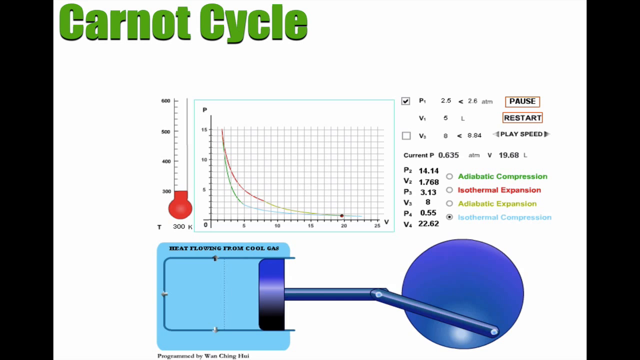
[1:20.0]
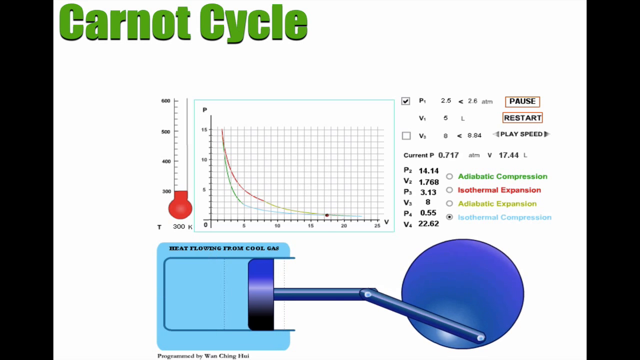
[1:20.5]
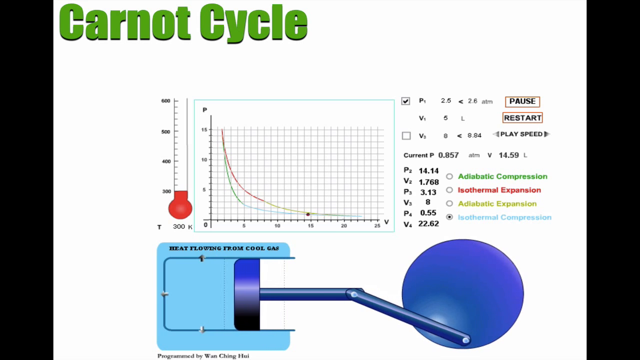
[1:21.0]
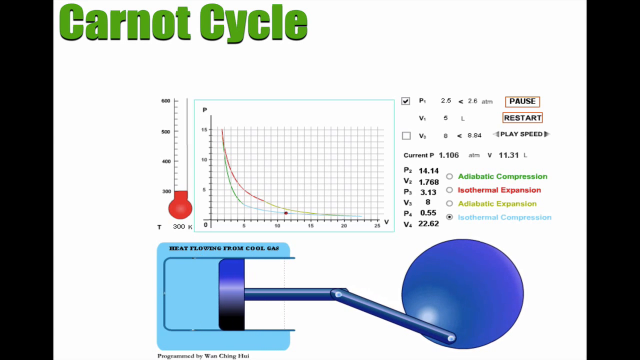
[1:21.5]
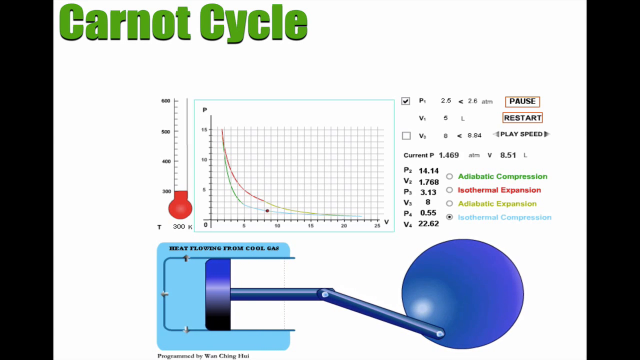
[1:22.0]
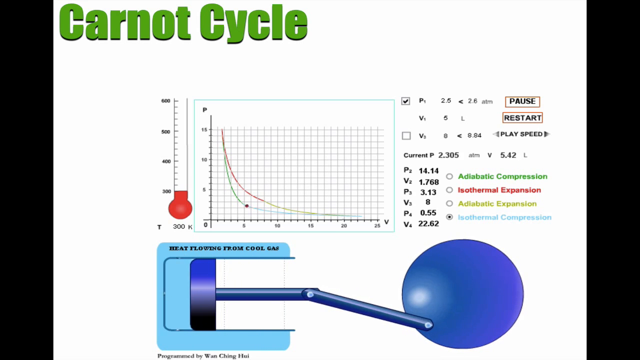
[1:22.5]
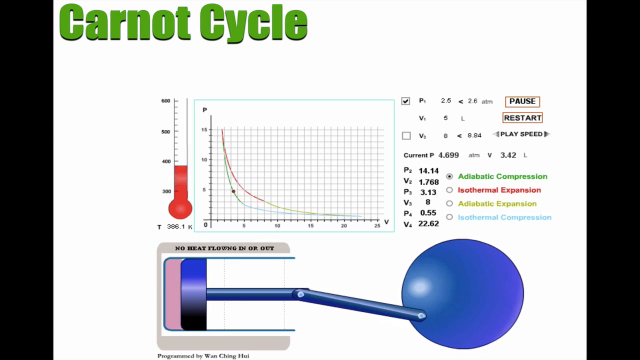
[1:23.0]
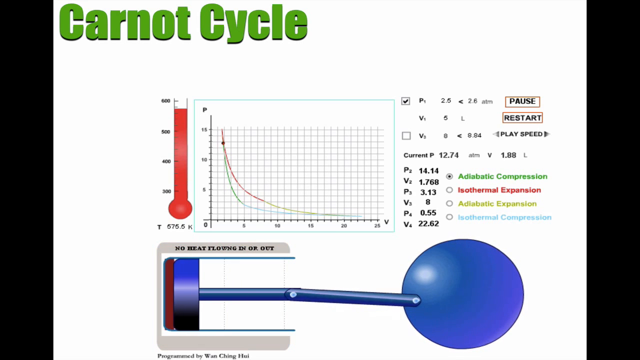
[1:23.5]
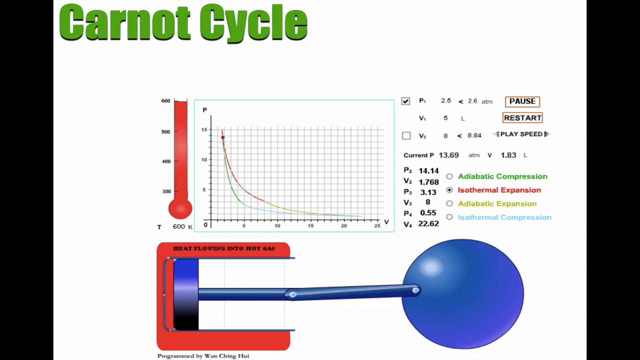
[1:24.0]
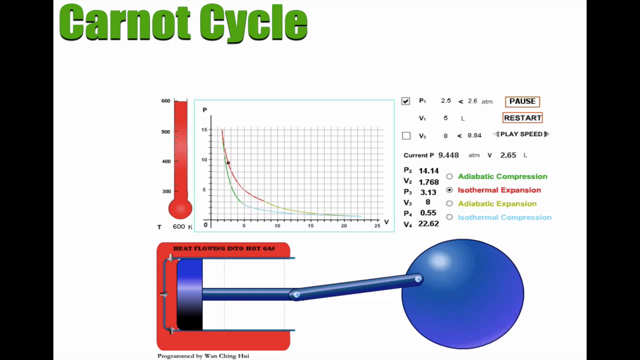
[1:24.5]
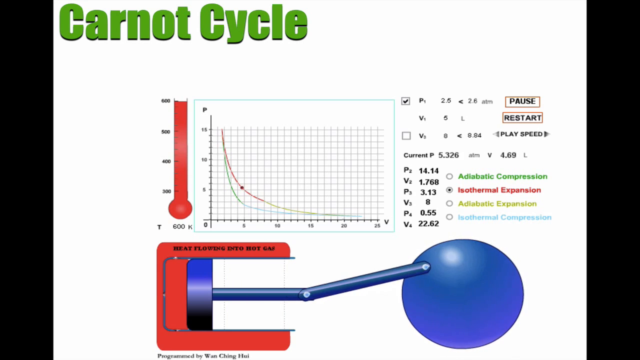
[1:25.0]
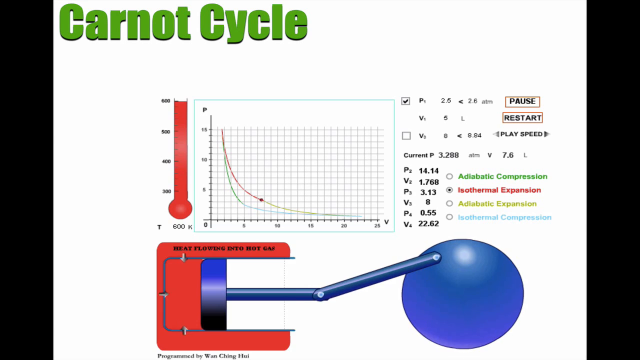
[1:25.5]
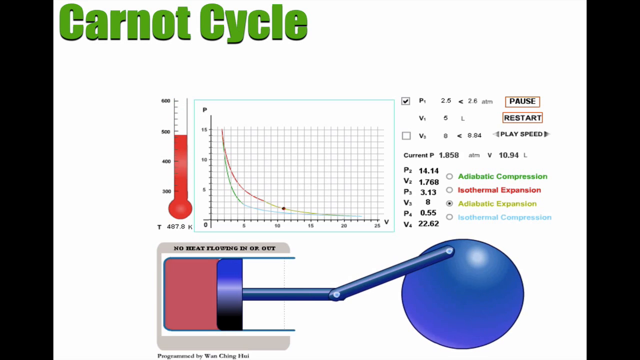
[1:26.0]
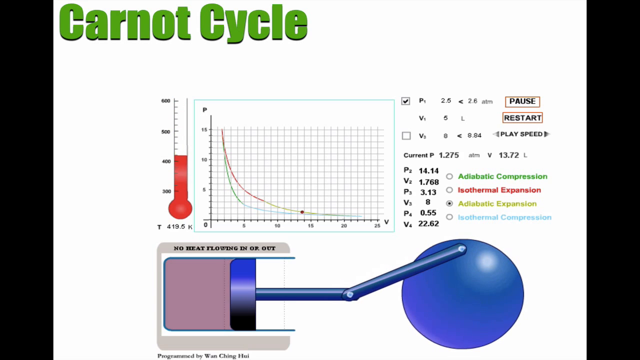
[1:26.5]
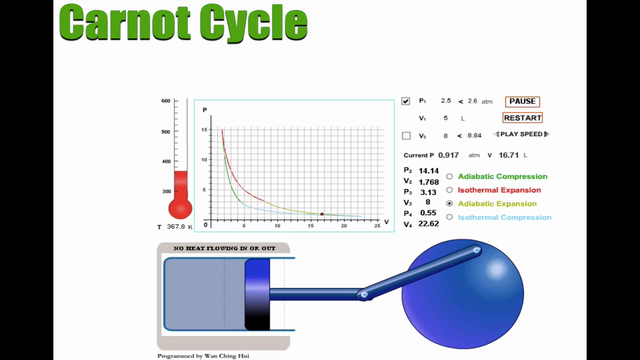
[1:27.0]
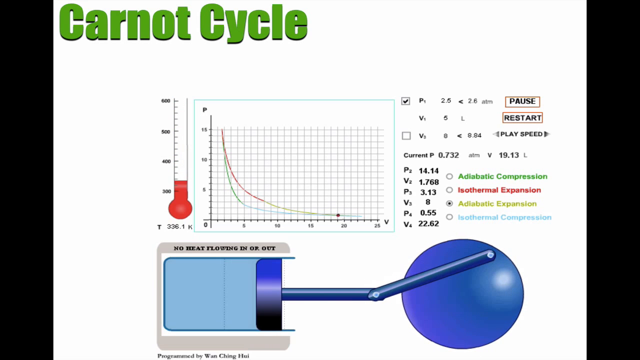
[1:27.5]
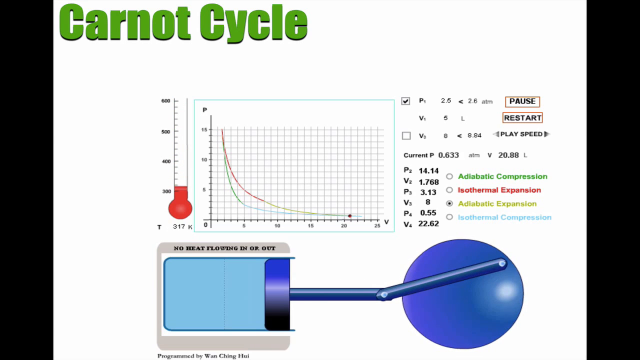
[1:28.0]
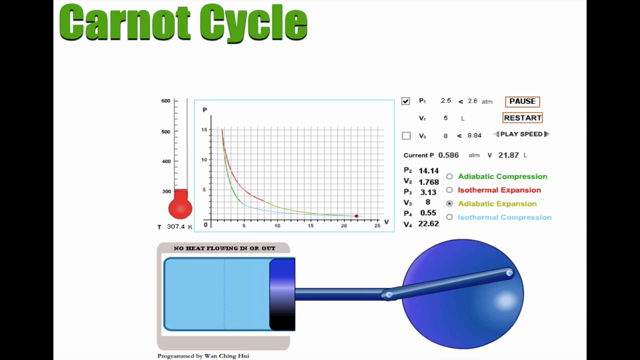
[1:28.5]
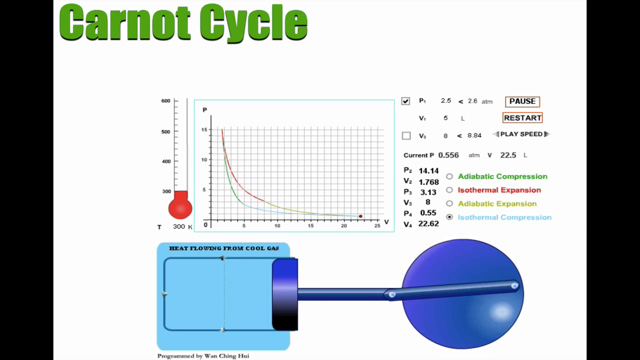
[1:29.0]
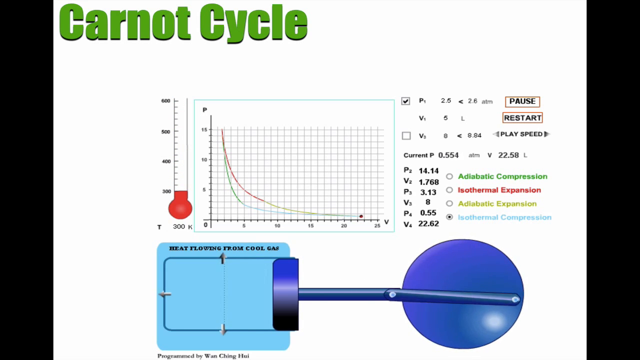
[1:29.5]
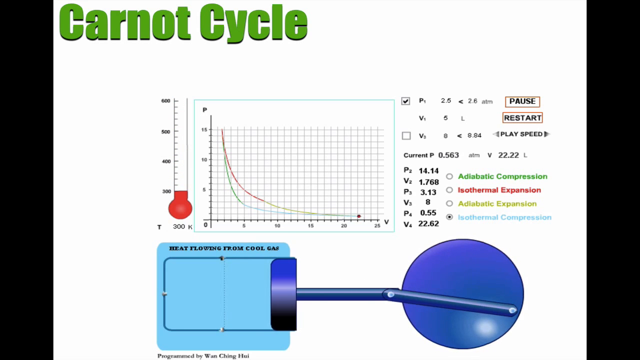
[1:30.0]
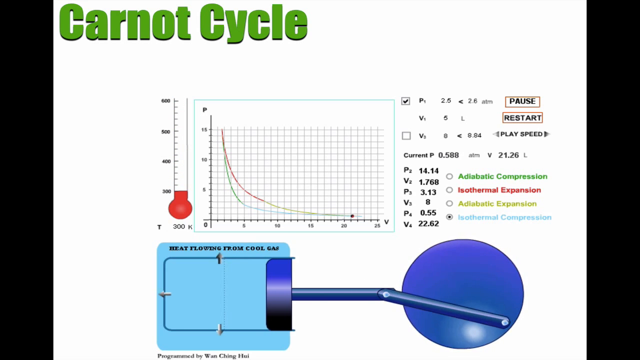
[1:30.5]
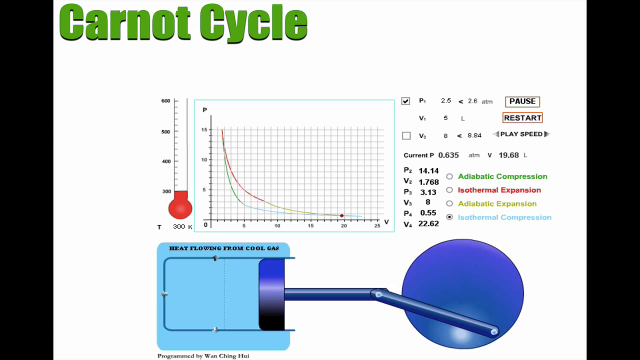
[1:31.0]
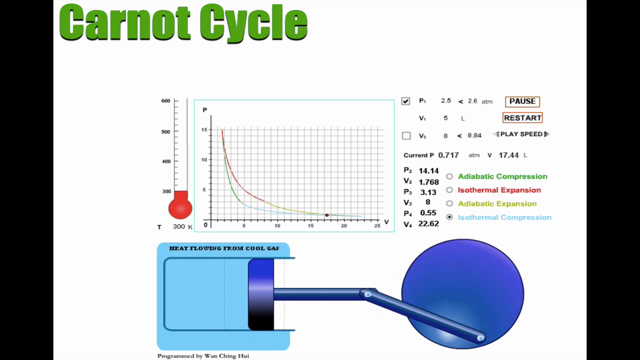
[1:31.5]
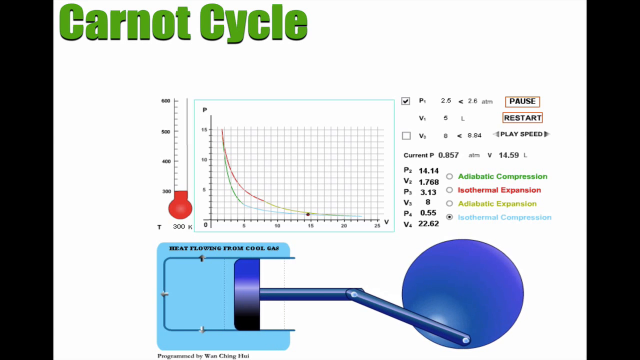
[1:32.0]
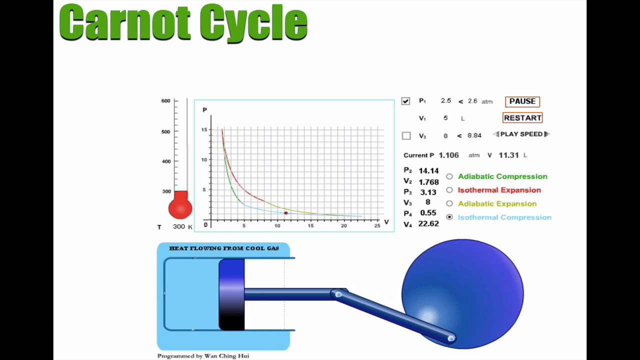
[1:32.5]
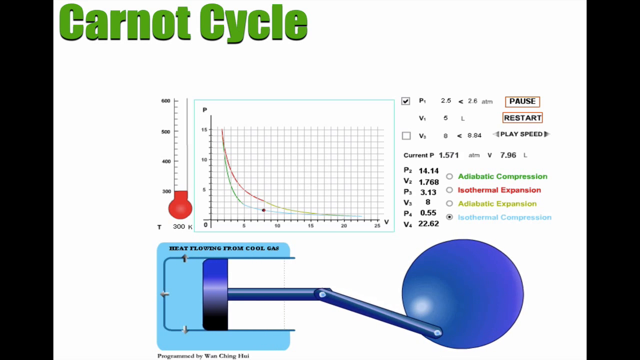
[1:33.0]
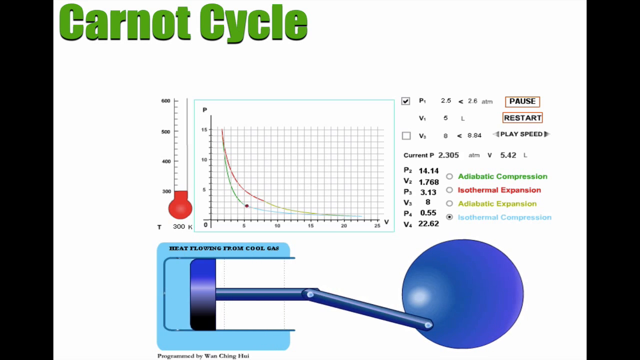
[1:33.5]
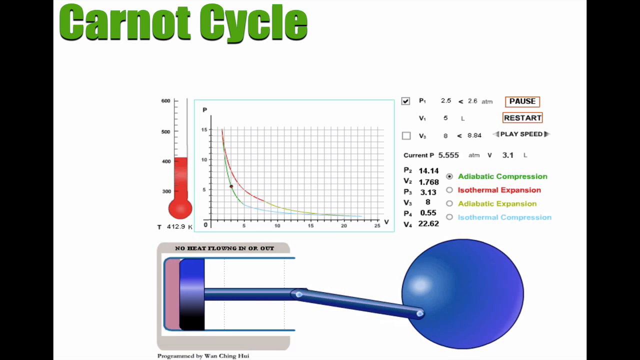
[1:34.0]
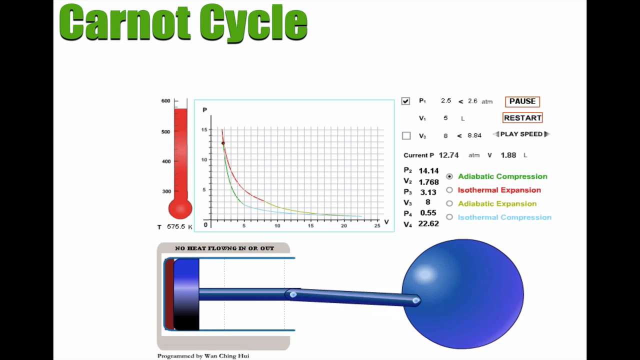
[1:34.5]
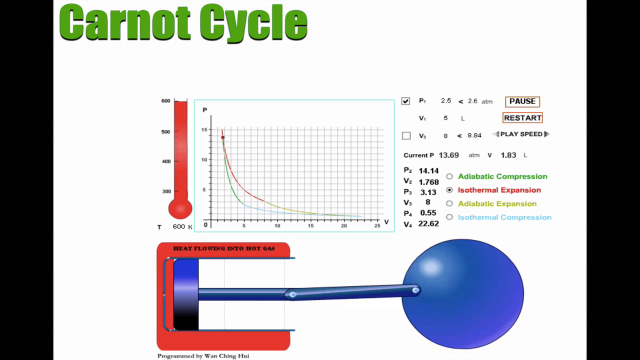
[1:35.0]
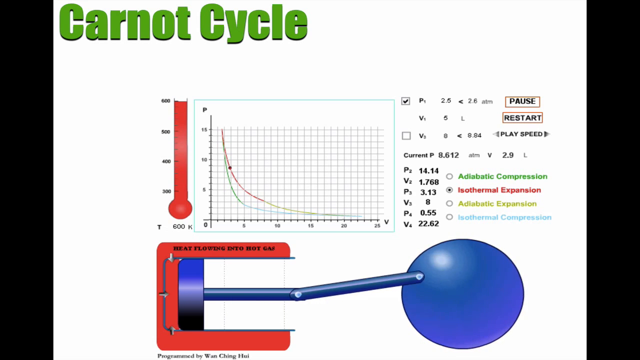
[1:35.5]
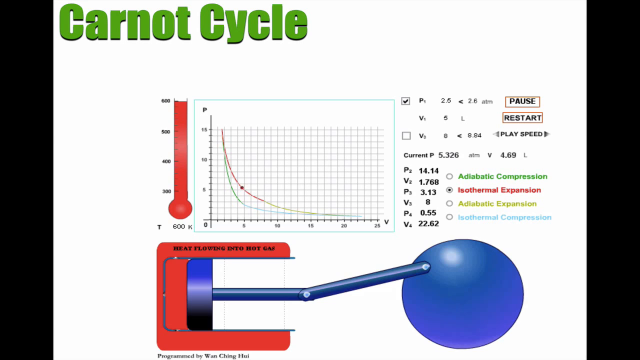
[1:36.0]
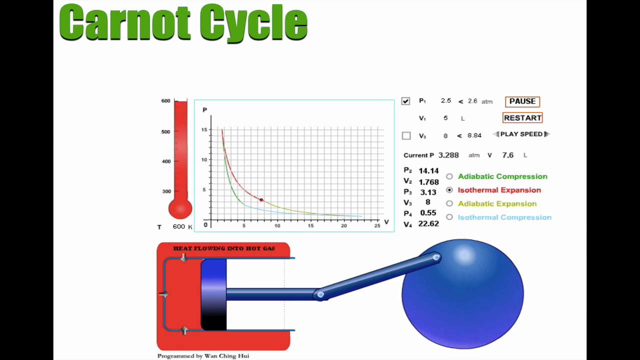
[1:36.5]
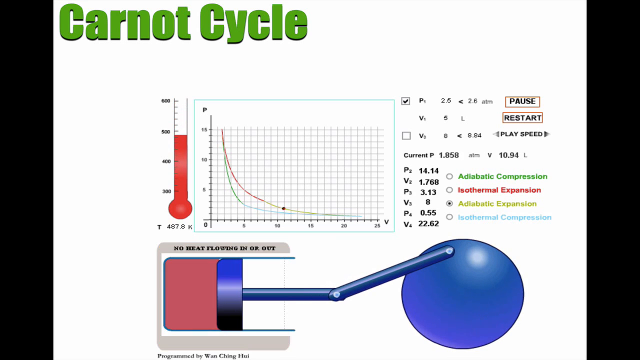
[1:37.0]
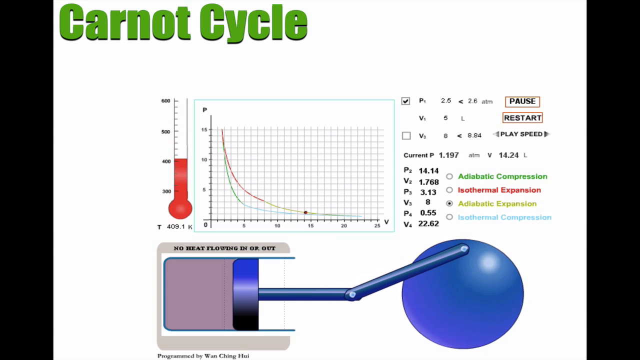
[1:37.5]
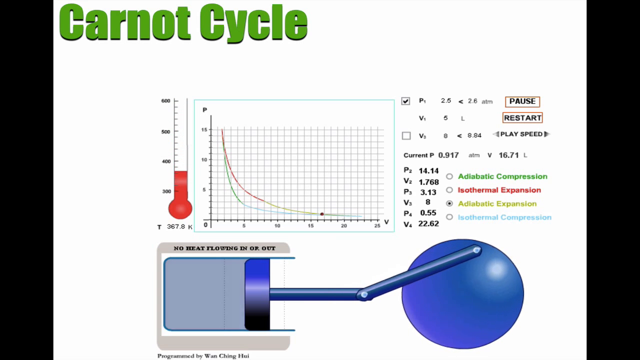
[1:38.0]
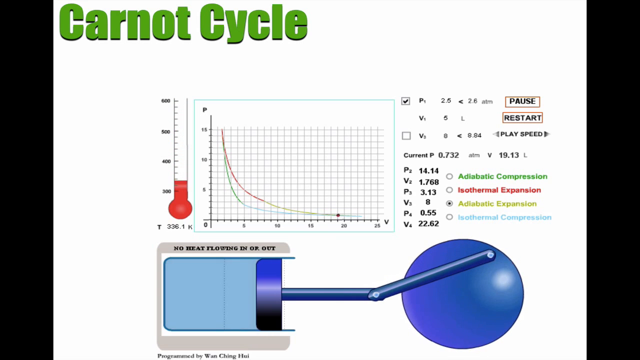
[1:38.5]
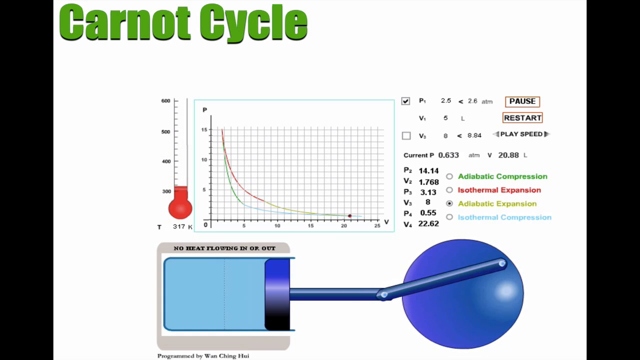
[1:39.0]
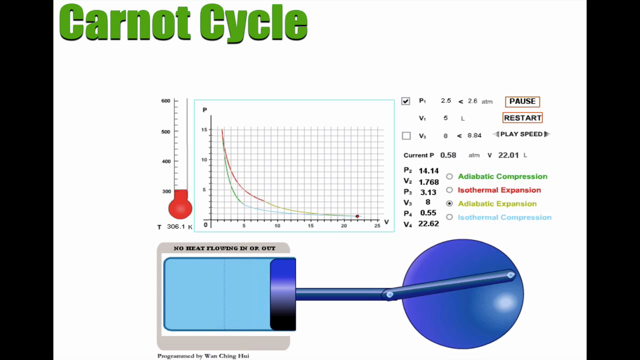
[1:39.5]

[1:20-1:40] The text in the bottom diagram changes to refer to heat flowing from the cool gas. When the stem of the device reaches back to the bottom of the container, the thermometer goes back to 600, the red liquid fills up the tube again, and the three sides at the bottom, the vertical and two horizontals, return to red. The same movement happens again: the base moves to the right of the container so that the contents are pale blue, with no color on the outside vertical or the two horizontals. The text at the top now reads "no heat flowing in or out", and the thermometer returns to around 300, its bottom setting. The cycle then repeats.